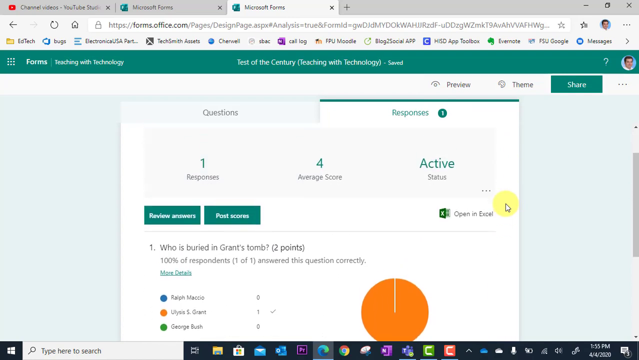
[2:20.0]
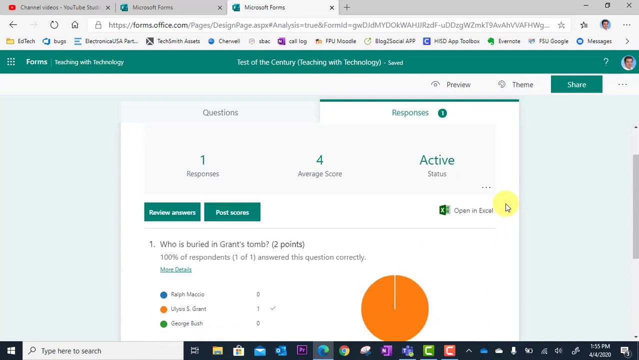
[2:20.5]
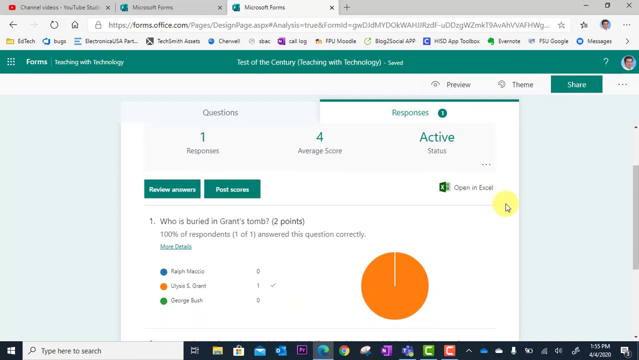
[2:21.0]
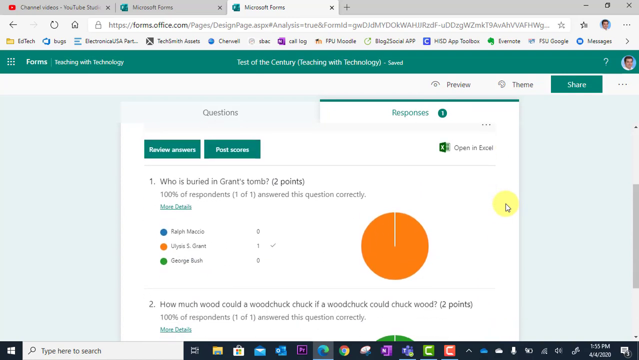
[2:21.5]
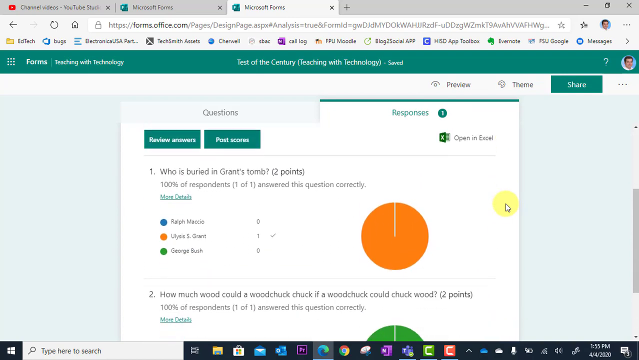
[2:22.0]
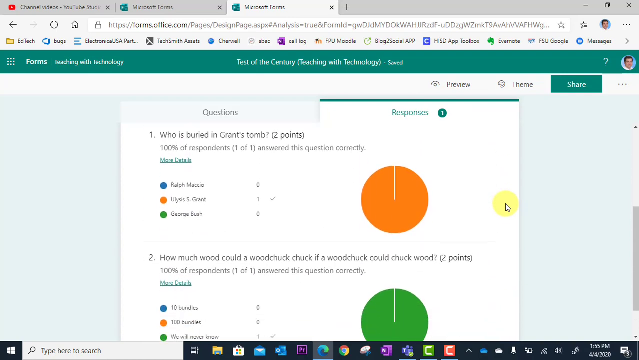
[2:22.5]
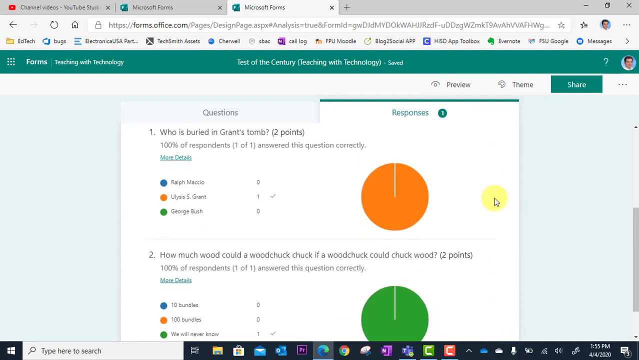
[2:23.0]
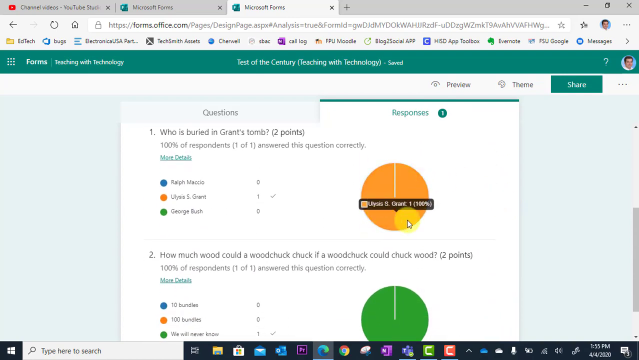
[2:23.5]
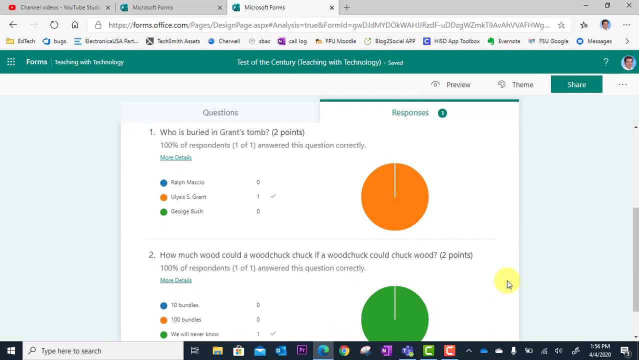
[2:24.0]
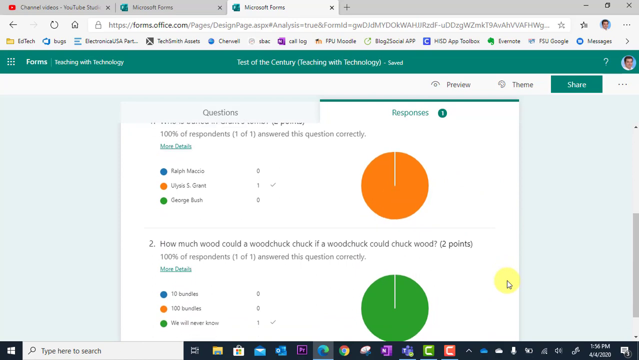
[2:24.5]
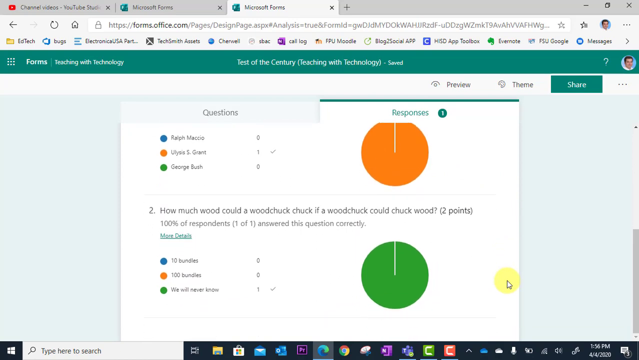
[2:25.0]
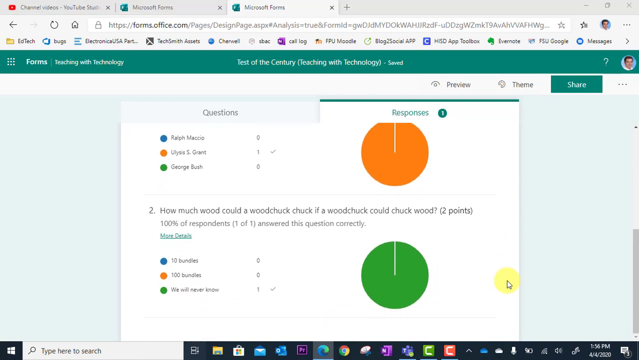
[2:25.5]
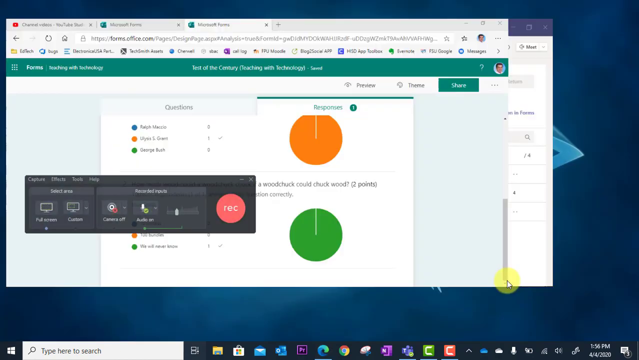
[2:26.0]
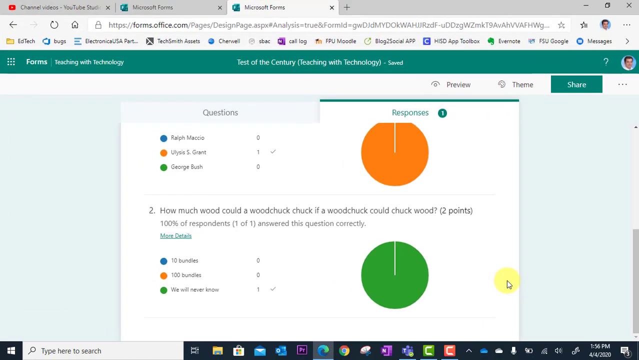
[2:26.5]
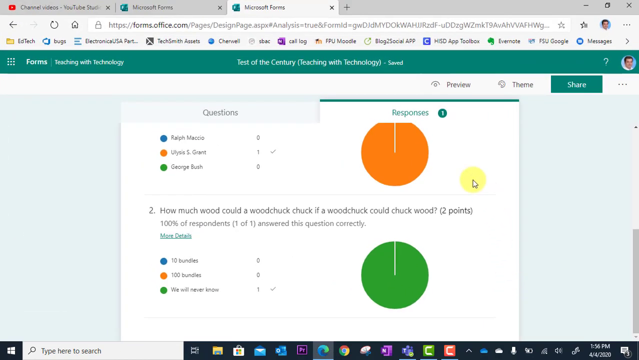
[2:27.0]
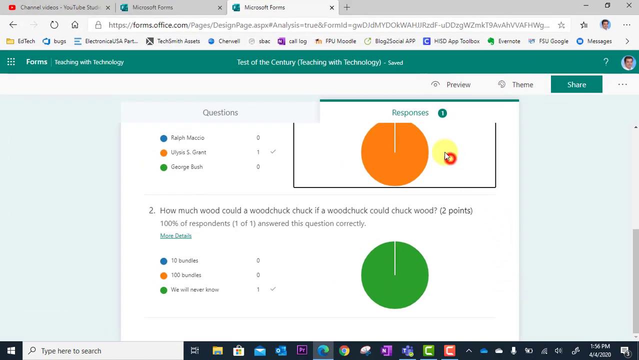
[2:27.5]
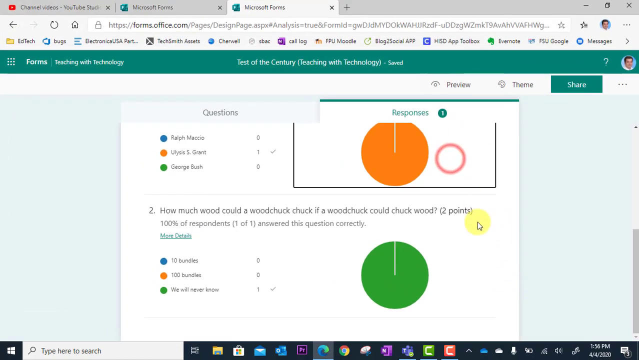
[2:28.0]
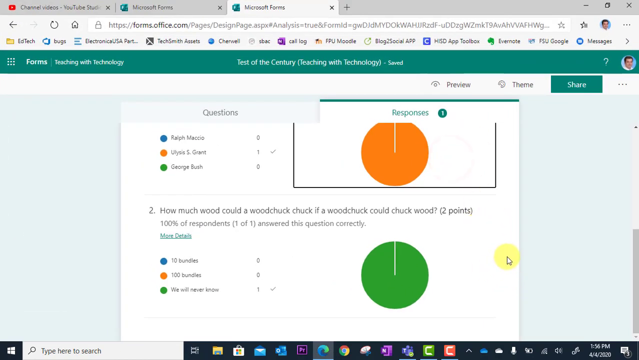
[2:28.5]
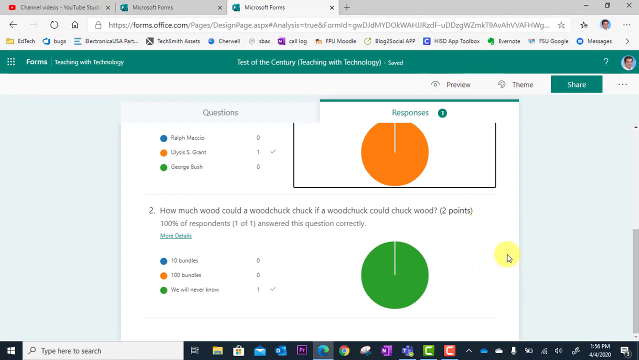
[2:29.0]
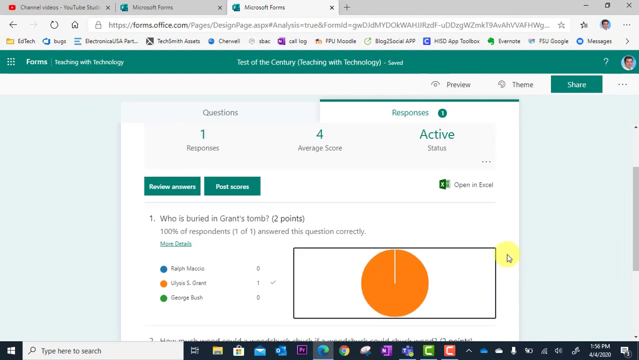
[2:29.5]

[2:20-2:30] The Microsoft Forms Responses page for the Test of the Century quiz shows graphical results for each question. Question 1, who is buried in Grant's tomb, has three possible answers listed on the left: Ralph Macchio in blue, Ulysses S. Grant in orange, and George Bush in green. The orange bar next to Ulysses S. Grant indicates it was selected by 100%, 1 out of 1 respondents, which is also shown in the pie chart to the right, almost entirely solid orange with a thin ring. Below, question 2, how much wood could a woodchuck chuck if a woodchuck could chuck wood, lists three options: 10 bundles in blue, 100 bundles in orange, and "we will never know" in green. The green option is marked as the correct choice and was selected by the sole respondent, resulting in a full solid green pie chart. Both charts show that no respondents chose any incorrect answers. The screen layout remains consistent, with teal header bars, a white background, and the browser tabs, bookmarks, and Windows taskbar visible at the edges.